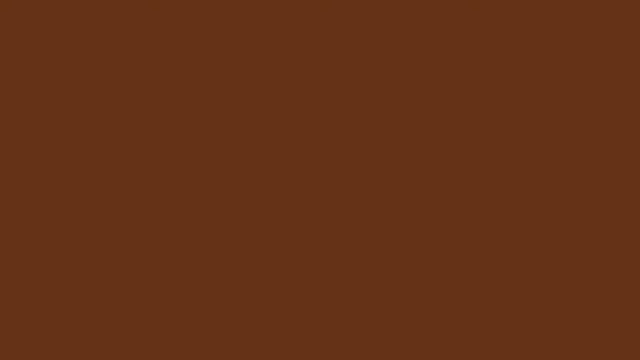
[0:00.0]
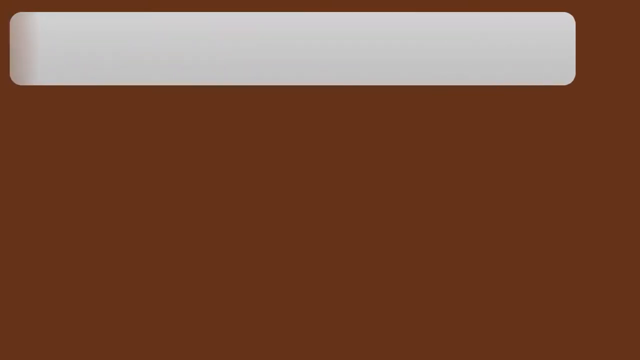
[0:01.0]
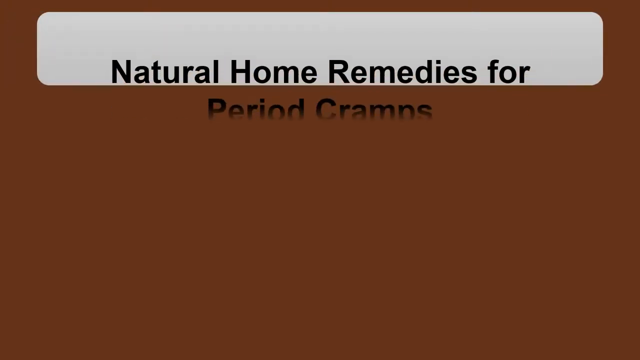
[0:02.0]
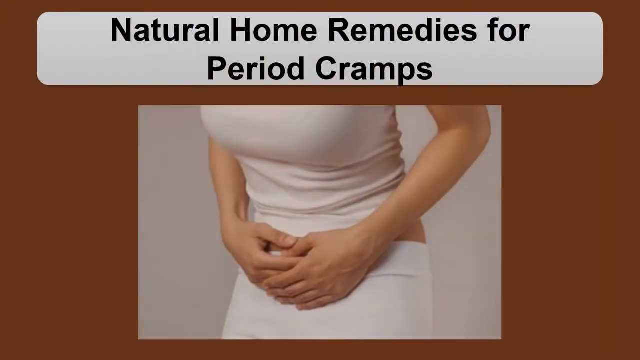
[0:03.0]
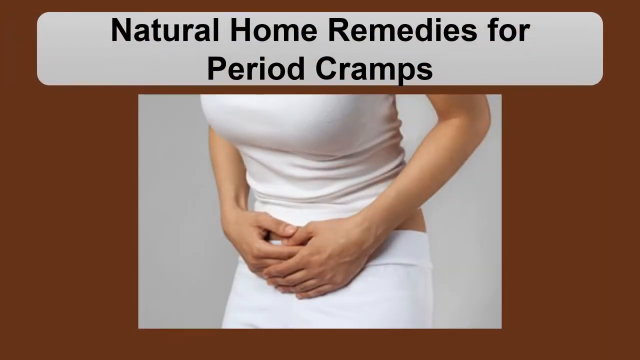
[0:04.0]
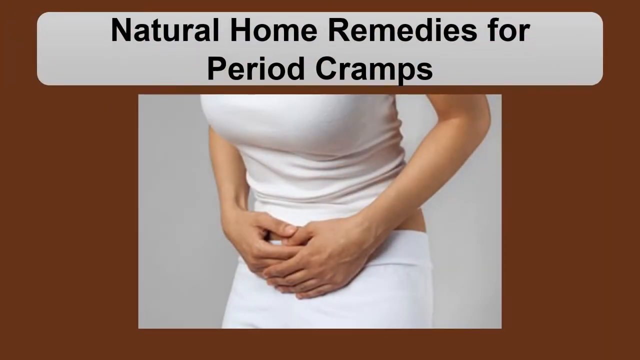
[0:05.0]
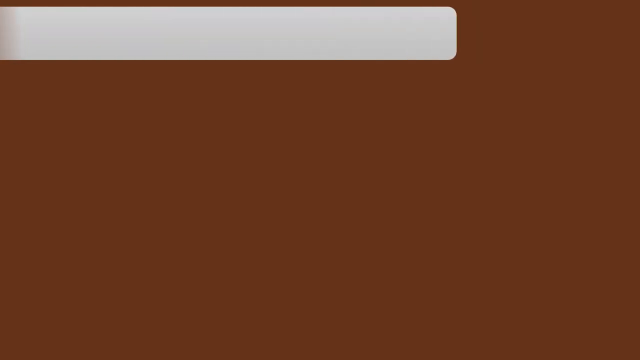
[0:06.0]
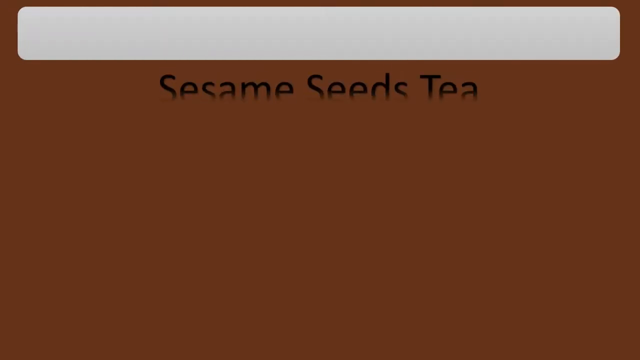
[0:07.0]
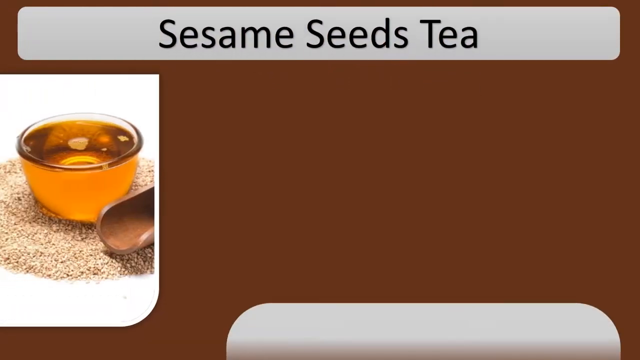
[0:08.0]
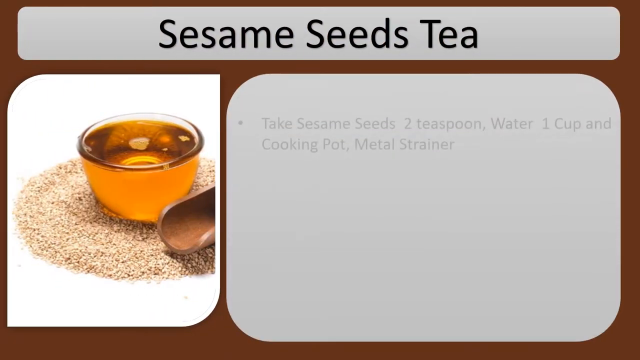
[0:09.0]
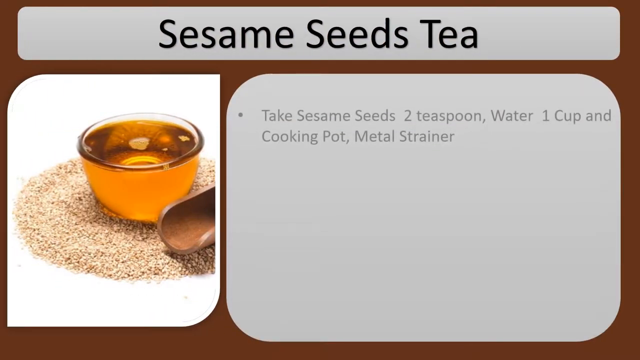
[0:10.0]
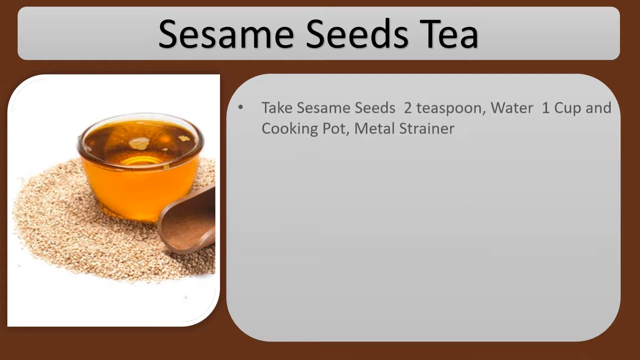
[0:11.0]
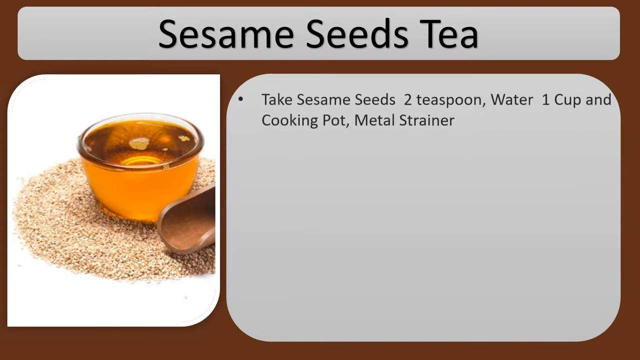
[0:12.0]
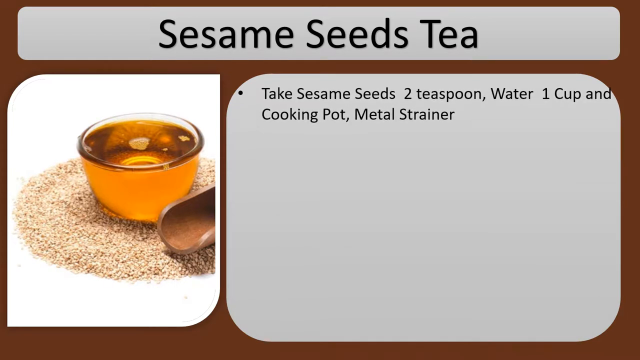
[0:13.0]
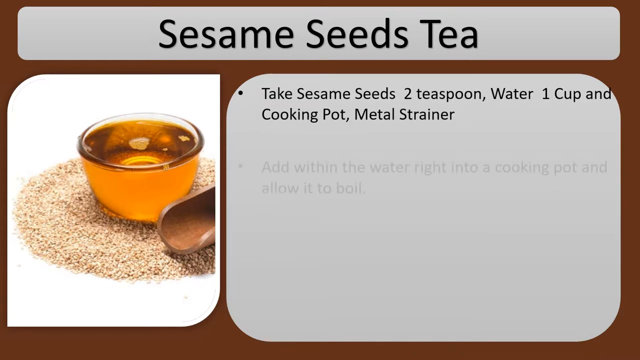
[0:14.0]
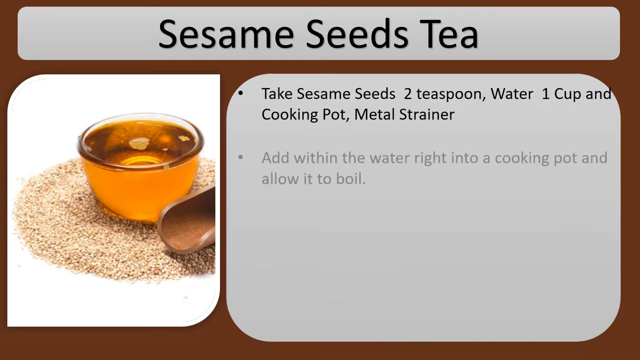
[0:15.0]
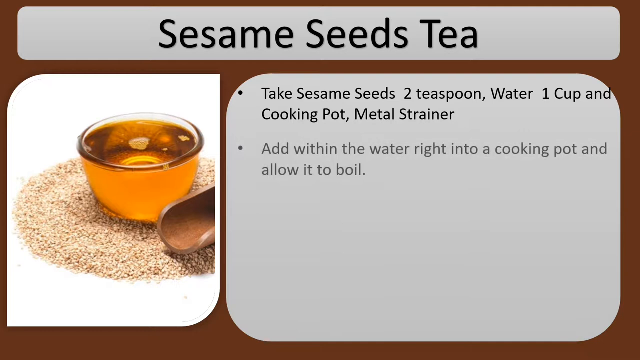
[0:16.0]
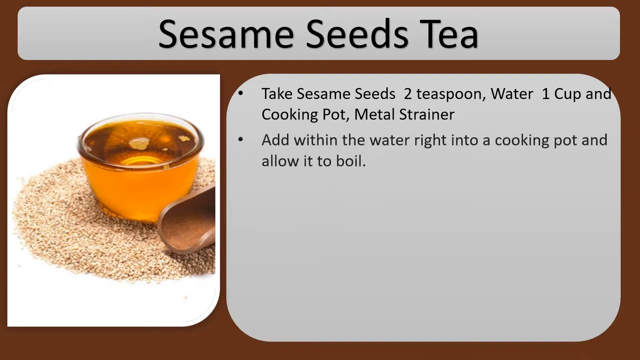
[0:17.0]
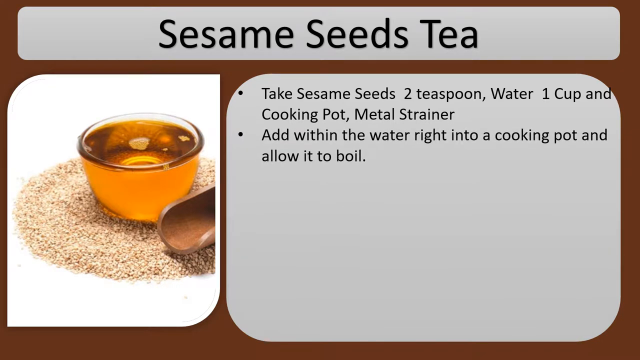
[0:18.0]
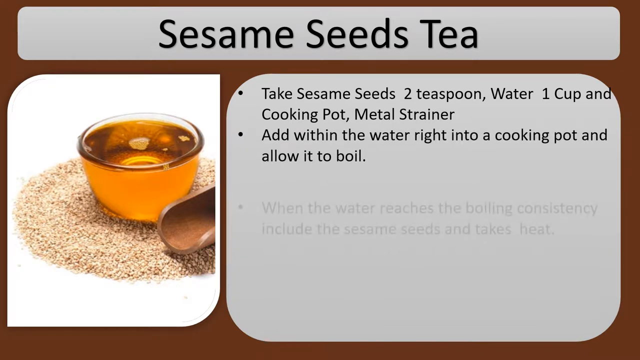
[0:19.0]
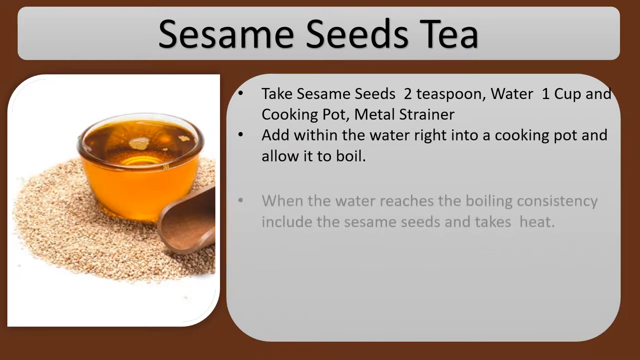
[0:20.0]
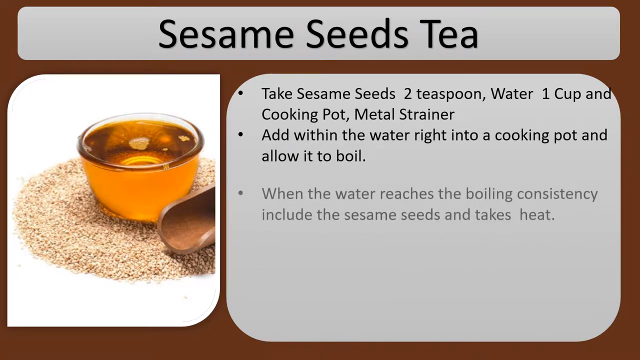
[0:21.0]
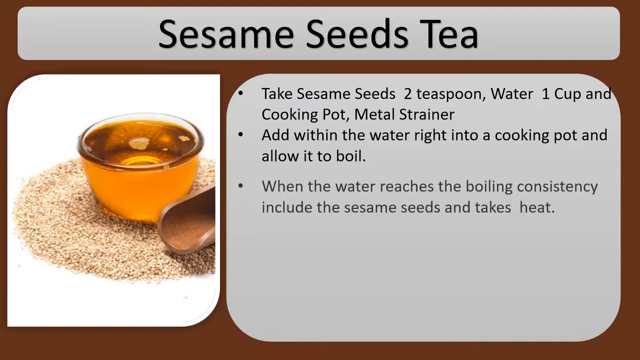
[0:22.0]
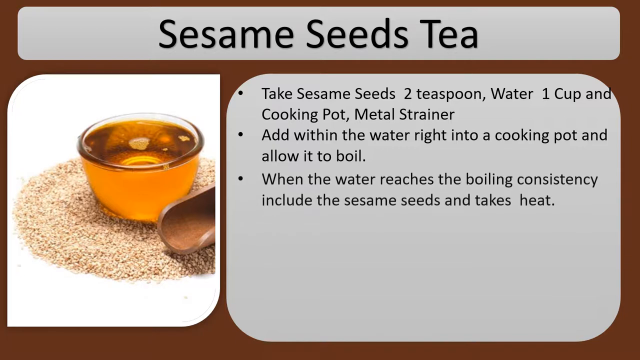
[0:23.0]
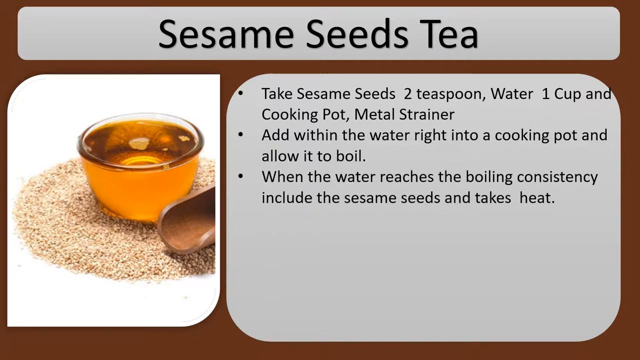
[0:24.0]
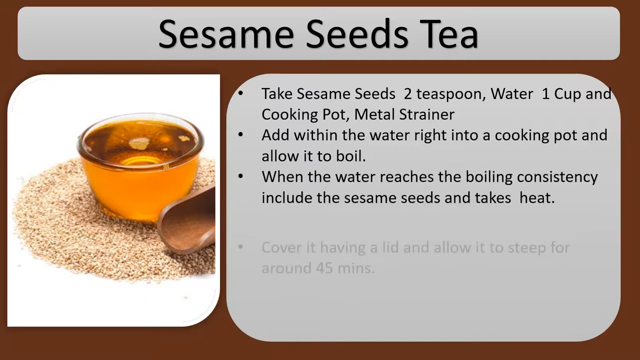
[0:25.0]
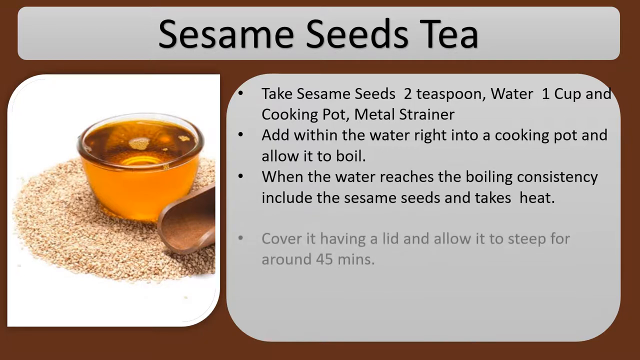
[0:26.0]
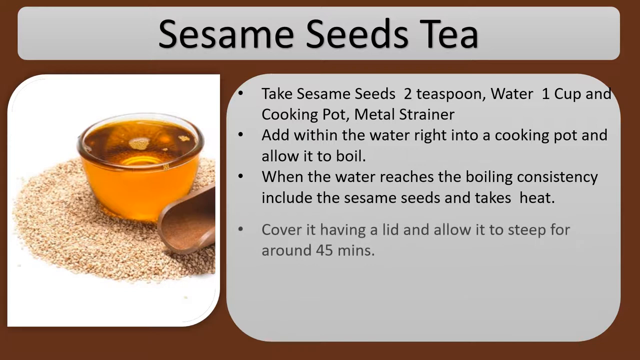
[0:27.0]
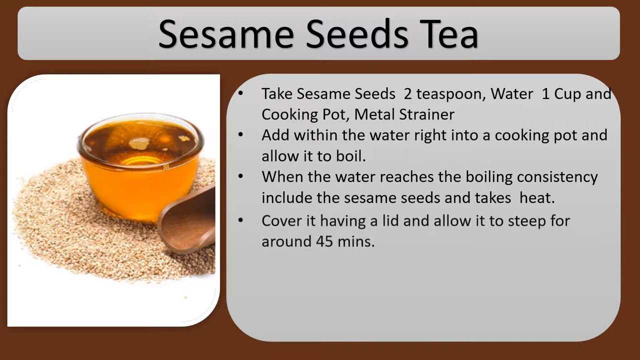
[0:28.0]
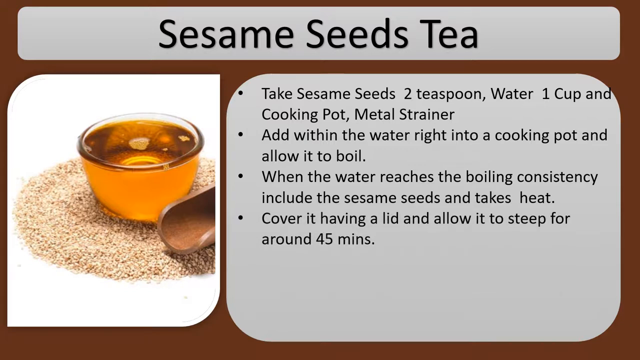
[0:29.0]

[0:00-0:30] A brown background with a black fade at the bottom appears, and words fade in. The text reads "natural home remedies for period cramps" alongside an image of a woman holding her stomach while kneeling over. Next, the text "sesame seed tea" appears; below it is a tea set in a round circle of seeds along with some kind of wooden utensil. A bullet point reads "take sesame seeds two teaspoons one cup water and put it in a cooking pot and make sure to have a metal strainer." The next bullet point says "add within the water right into a cooking pot and allow to boil." The third reads "when the water reaches the boiling consistency include the sesame seeds and takes heat." The last point says "cover it having a lid and allow it to steep for around 45 minutes." The wording on screen is not clear or grammatically correct.